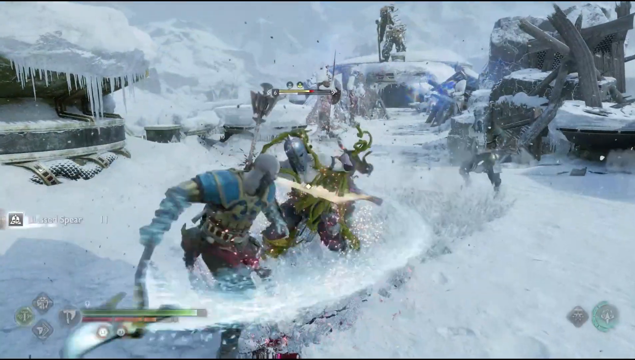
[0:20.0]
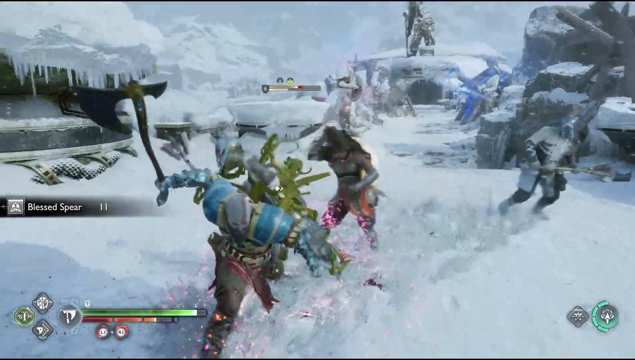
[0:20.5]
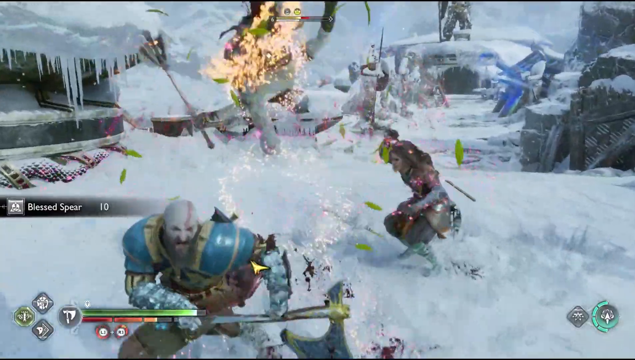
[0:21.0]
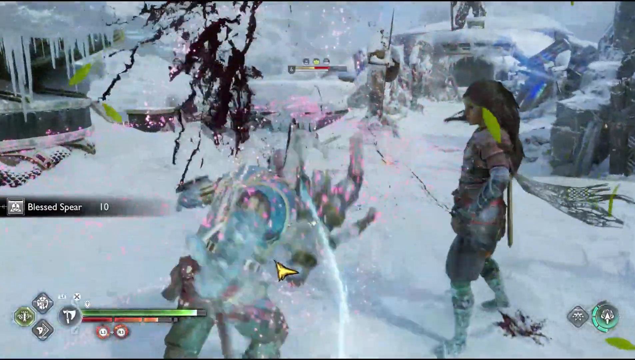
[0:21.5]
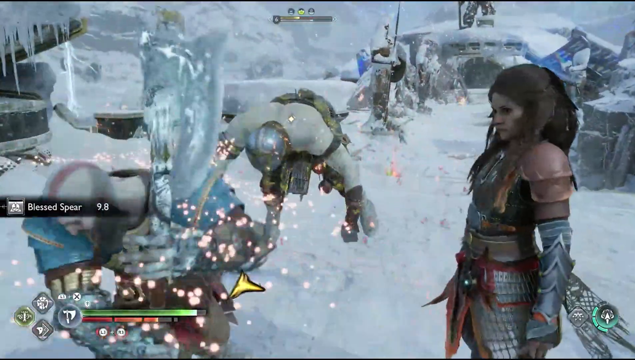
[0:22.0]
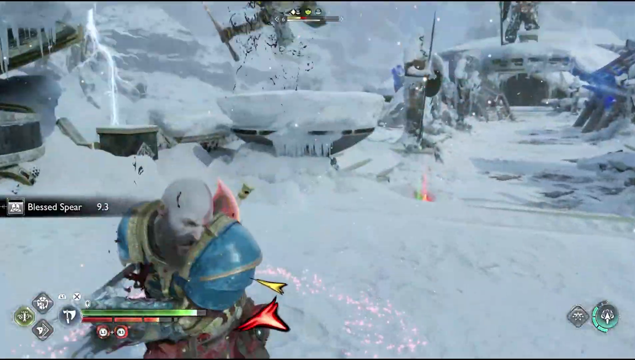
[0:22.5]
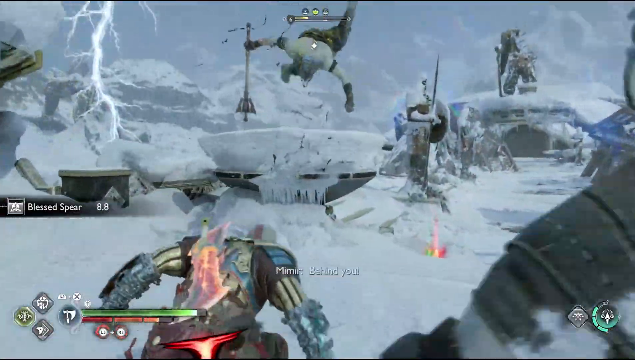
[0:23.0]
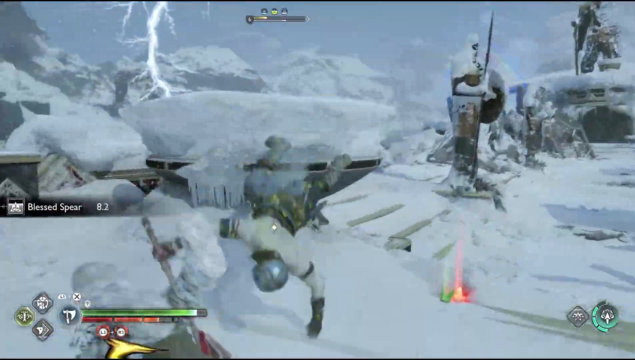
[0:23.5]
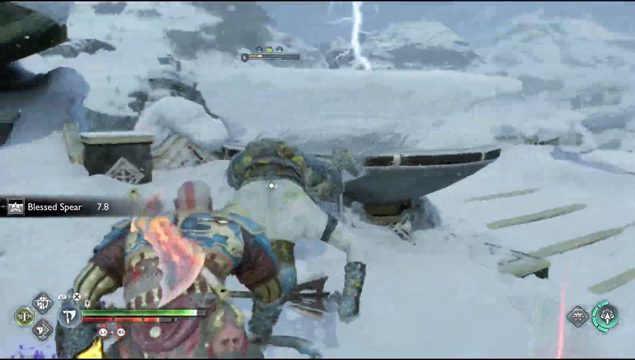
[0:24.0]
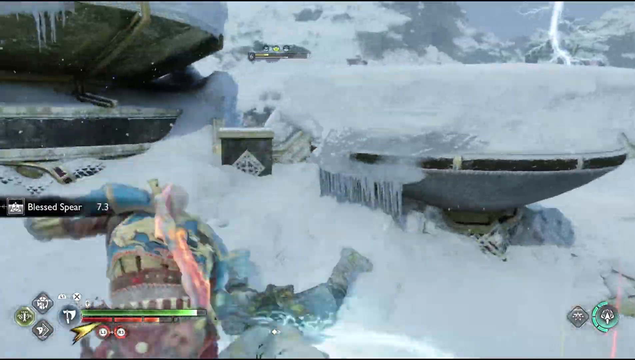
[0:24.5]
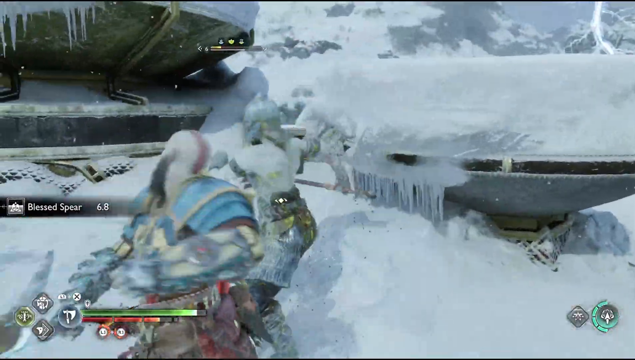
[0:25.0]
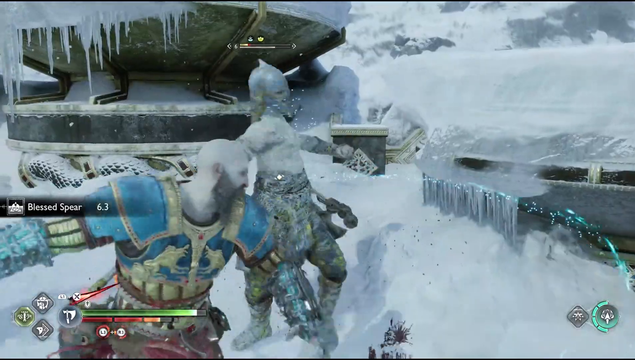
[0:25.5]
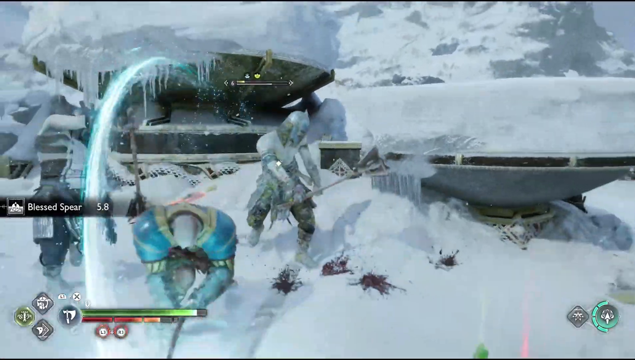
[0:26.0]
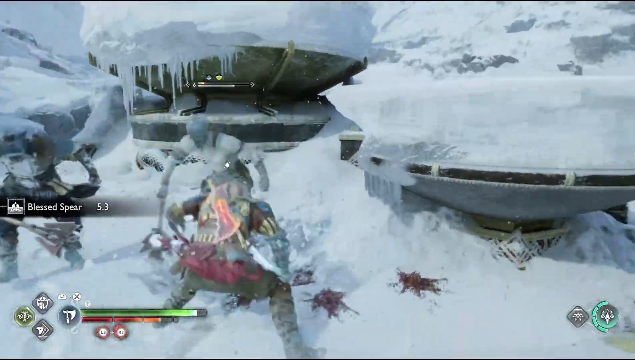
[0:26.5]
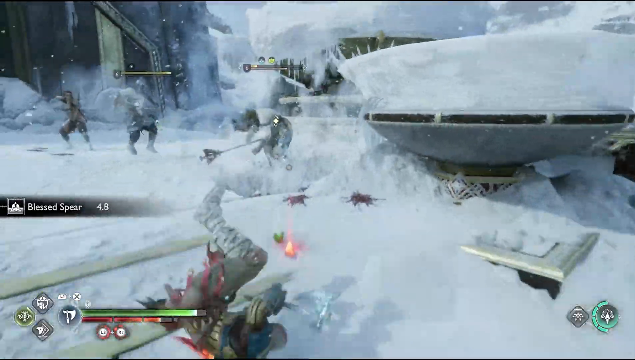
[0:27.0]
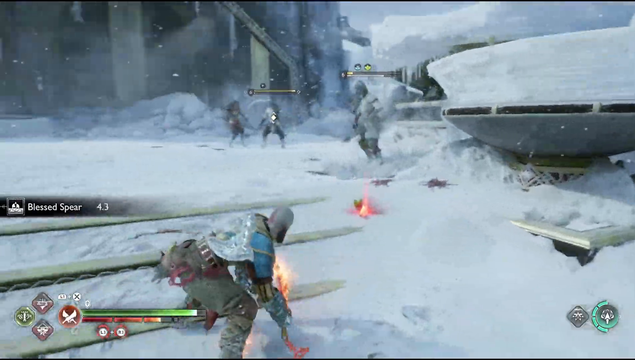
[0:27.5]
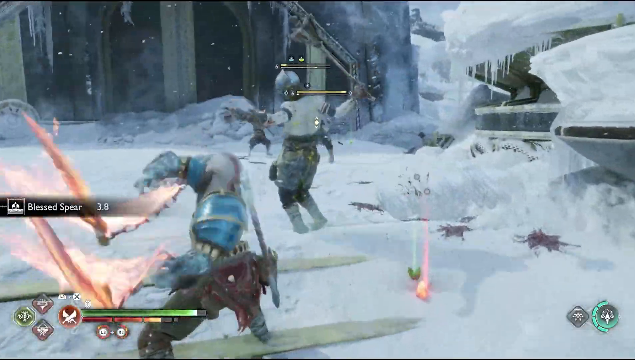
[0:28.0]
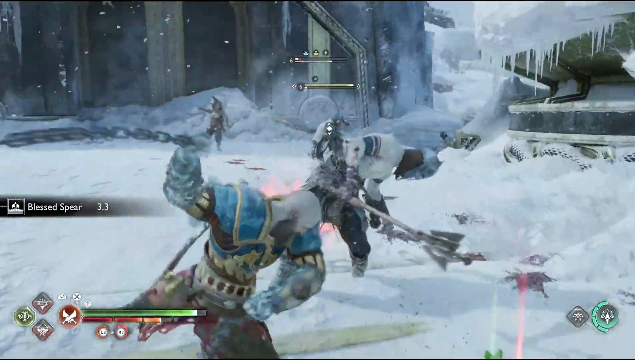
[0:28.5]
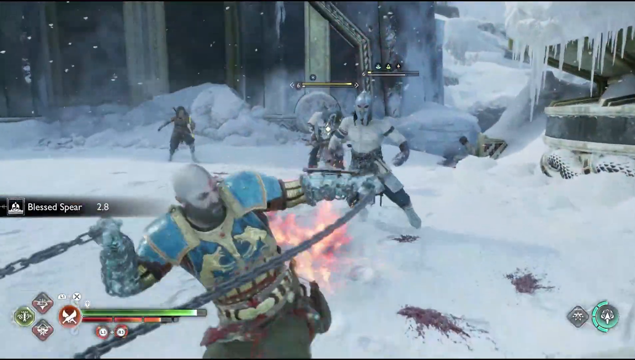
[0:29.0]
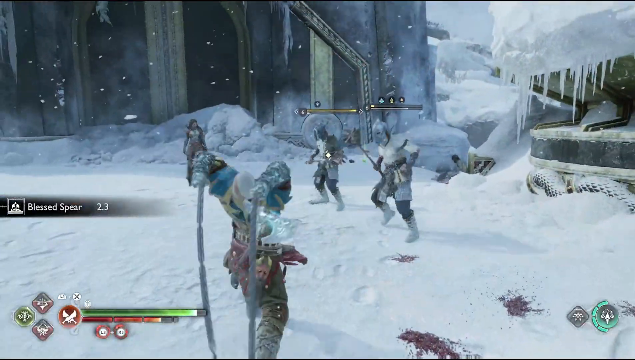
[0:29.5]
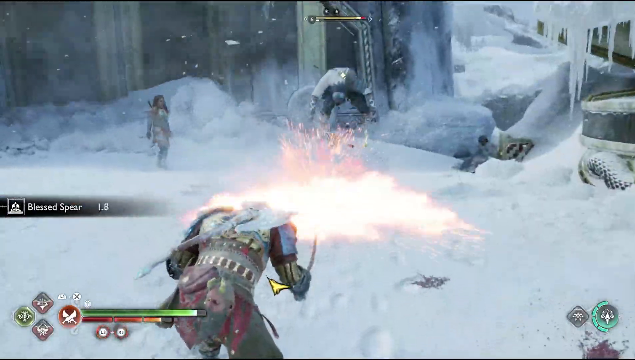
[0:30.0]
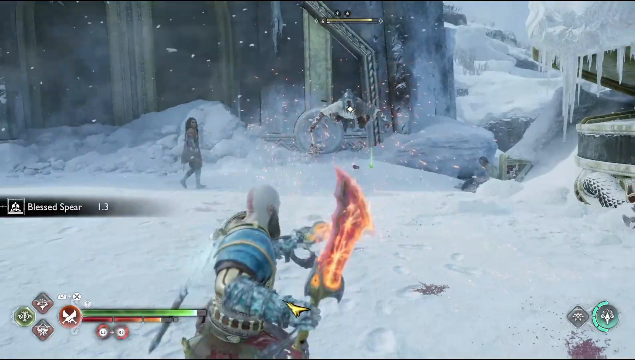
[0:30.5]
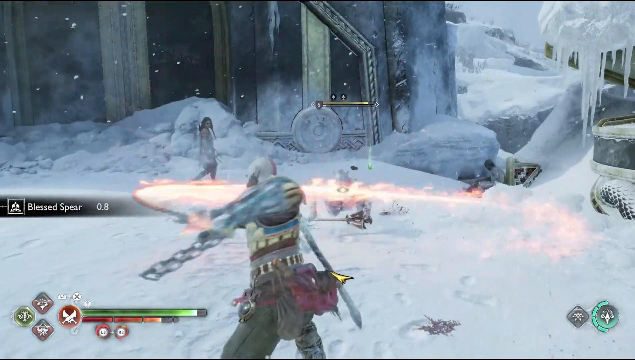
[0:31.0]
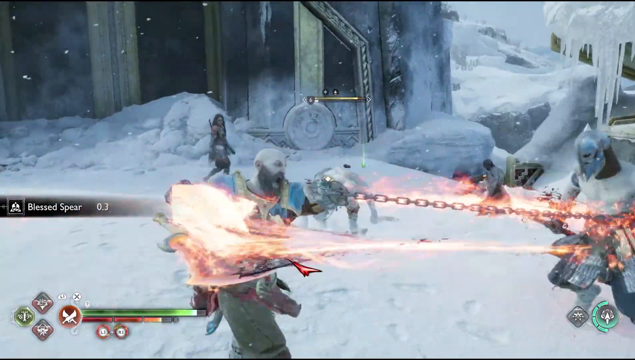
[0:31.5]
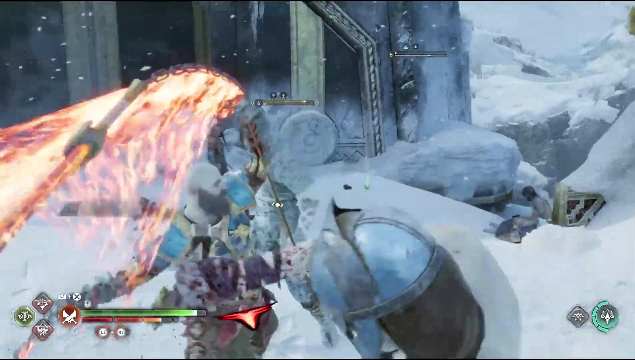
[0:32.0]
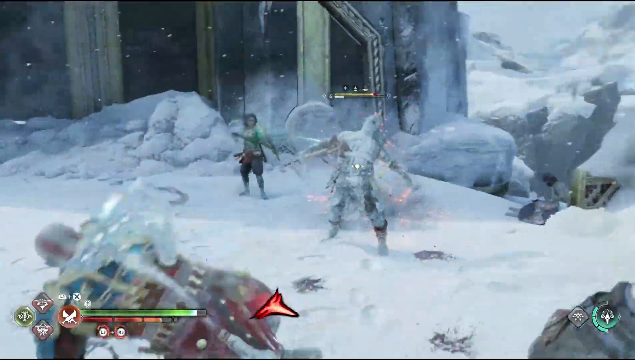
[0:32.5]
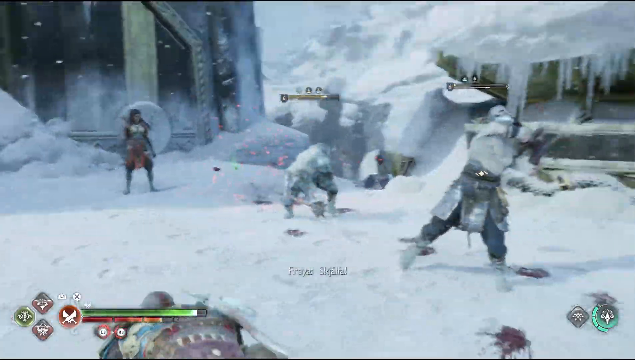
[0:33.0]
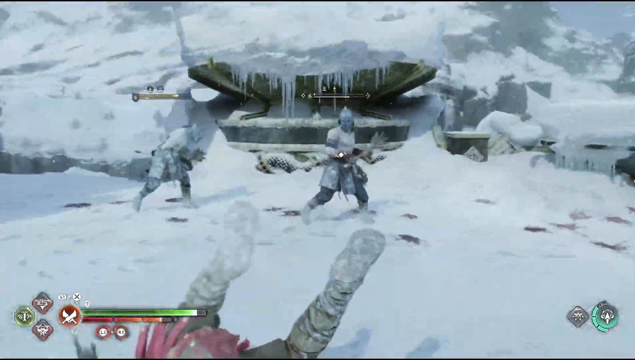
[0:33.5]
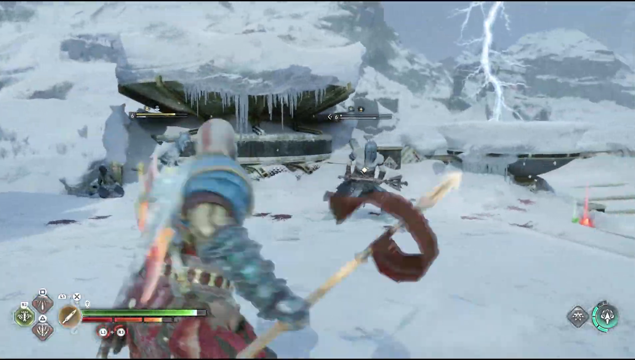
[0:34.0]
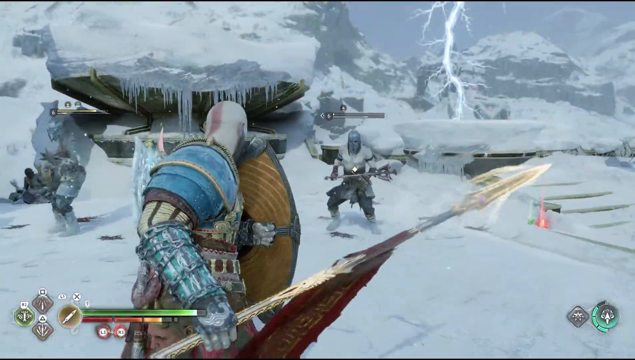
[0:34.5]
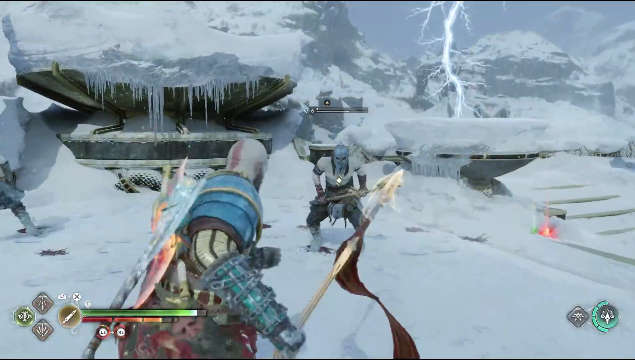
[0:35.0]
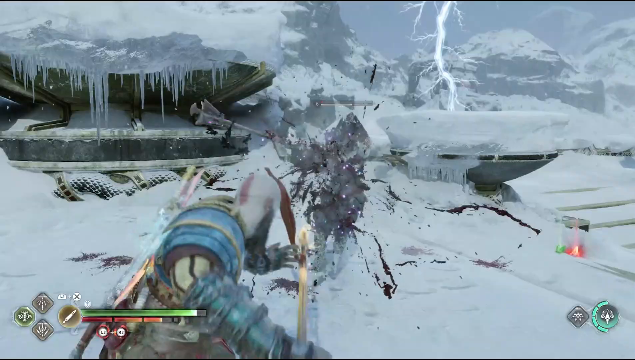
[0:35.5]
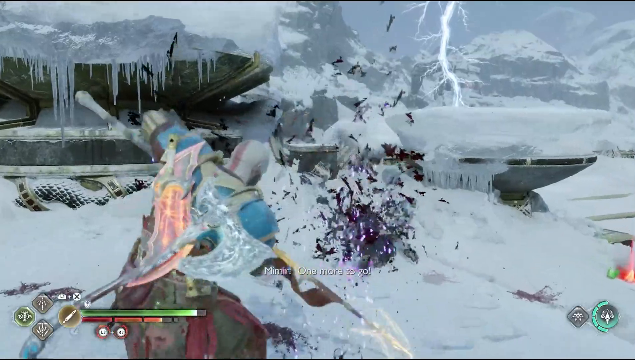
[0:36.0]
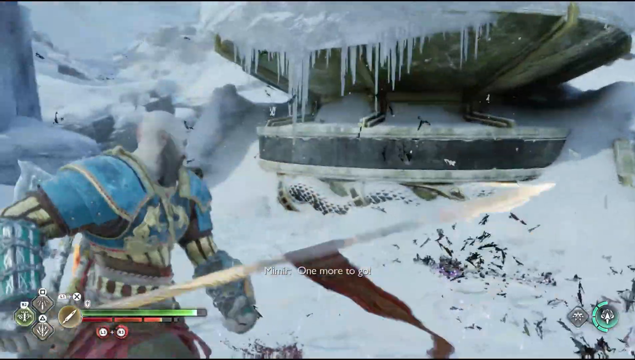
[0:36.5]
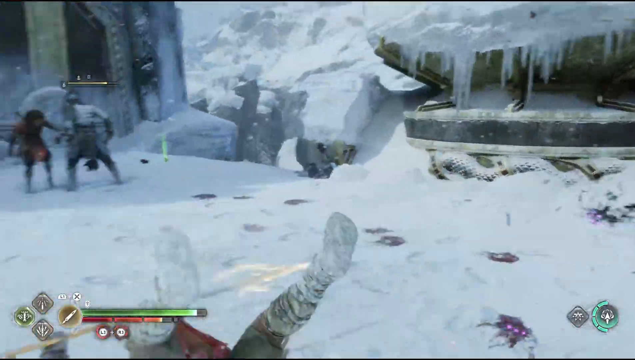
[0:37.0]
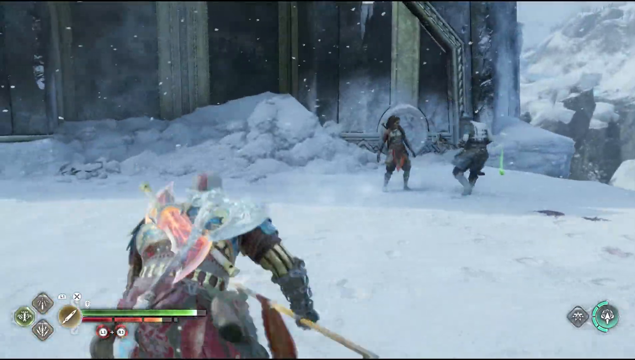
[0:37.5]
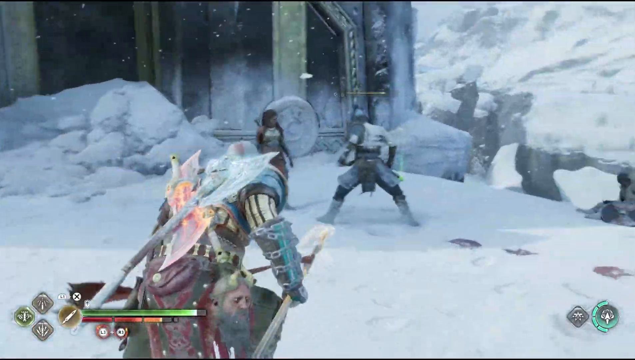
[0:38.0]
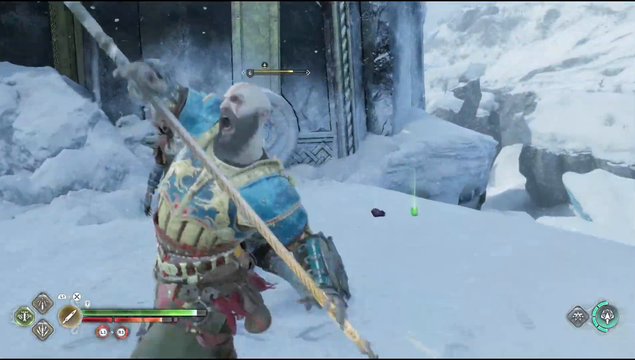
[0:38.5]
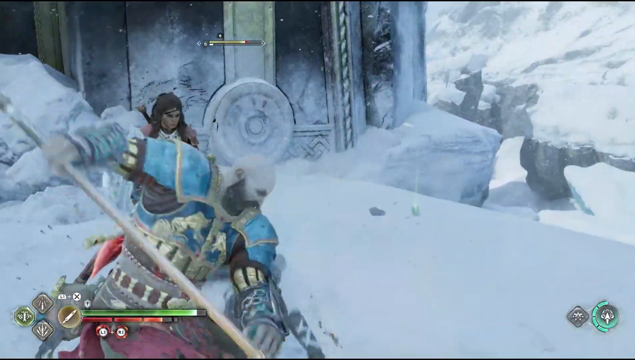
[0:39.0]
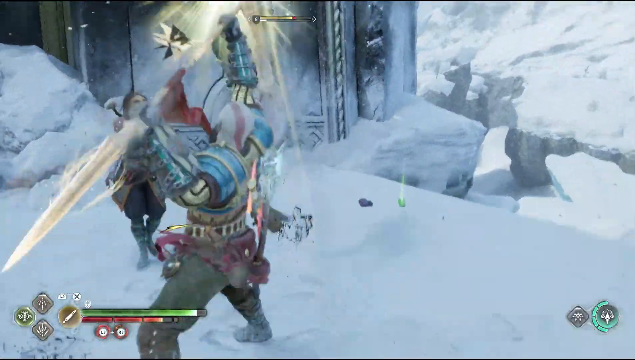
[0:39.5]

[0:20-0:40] A video game is being played in the snow, with a background that seems to be mostly white. Lightning strikes come down in the background, and there are piles of snow. Some of the characters have fire and flame on different chains. A lot of fighting happens right in the middle of the screen between a couple of different characters, not just one. In the background is something kind of like a big barn. The lightning strikes continue and stay longer than real lightning does. One of the fighting characters is a woman with long black hair. Some of the characters are blue or a different color, and they use swords of different colors in the fight.